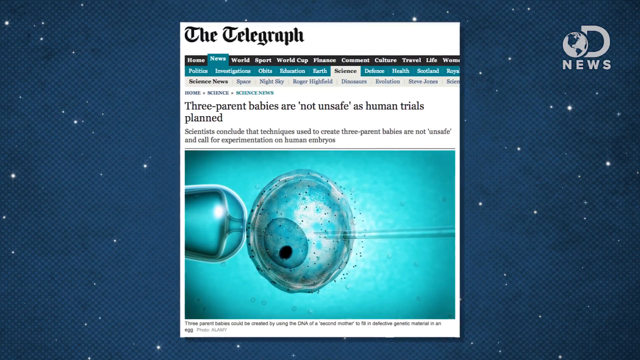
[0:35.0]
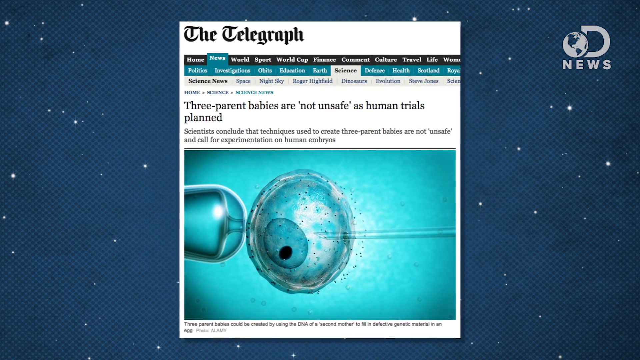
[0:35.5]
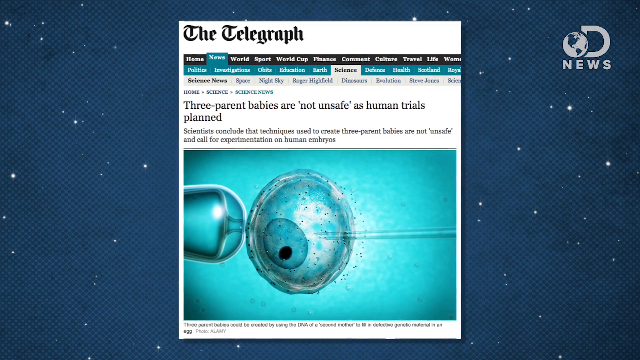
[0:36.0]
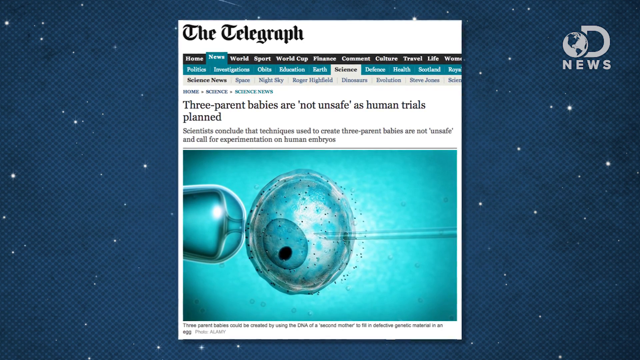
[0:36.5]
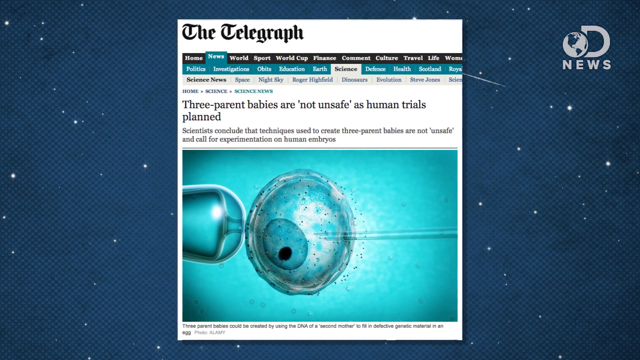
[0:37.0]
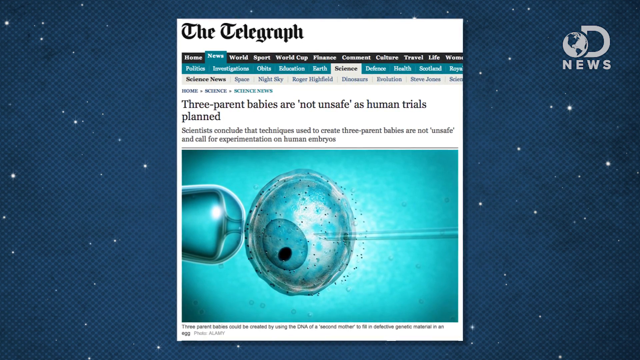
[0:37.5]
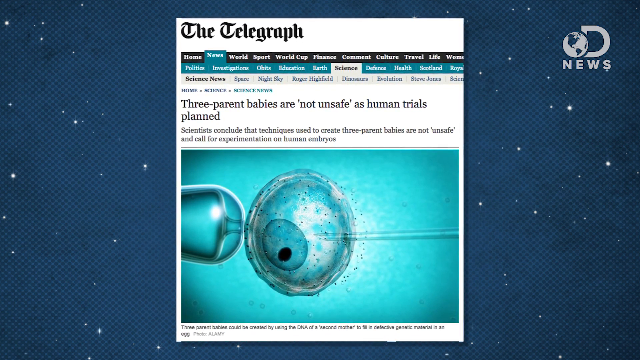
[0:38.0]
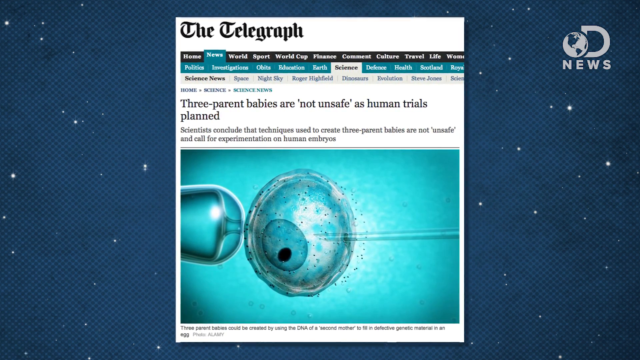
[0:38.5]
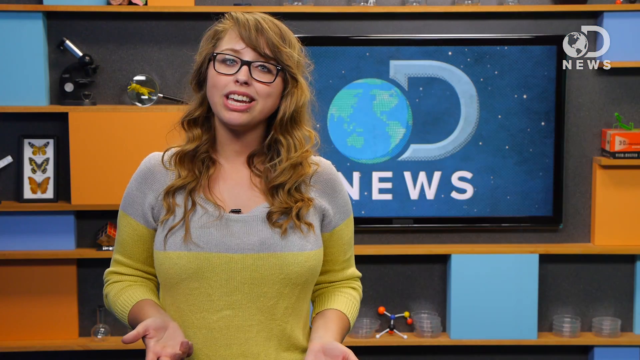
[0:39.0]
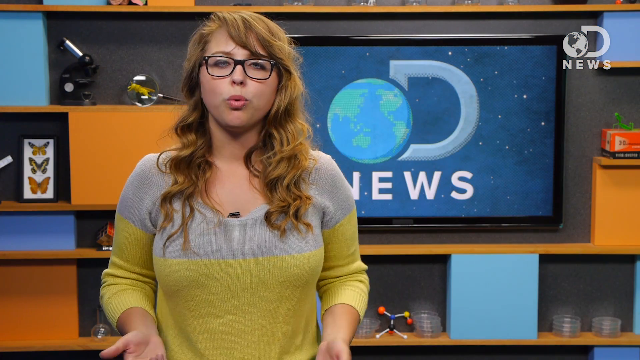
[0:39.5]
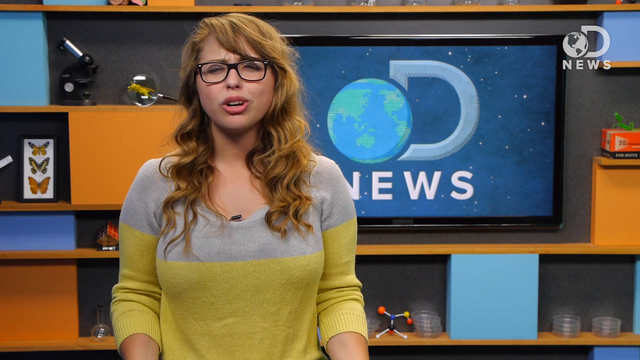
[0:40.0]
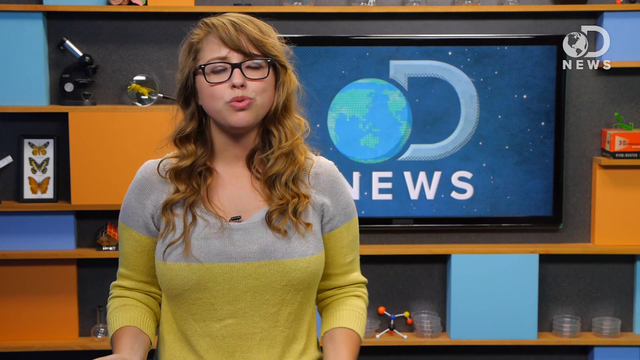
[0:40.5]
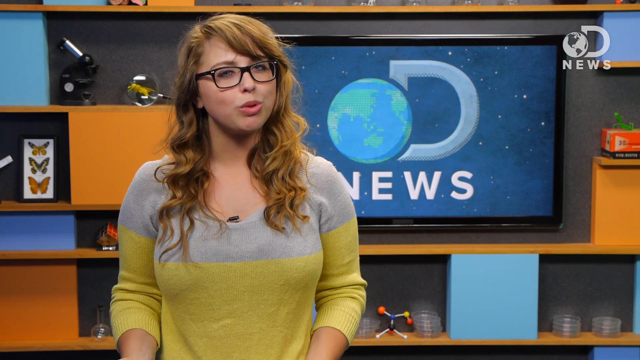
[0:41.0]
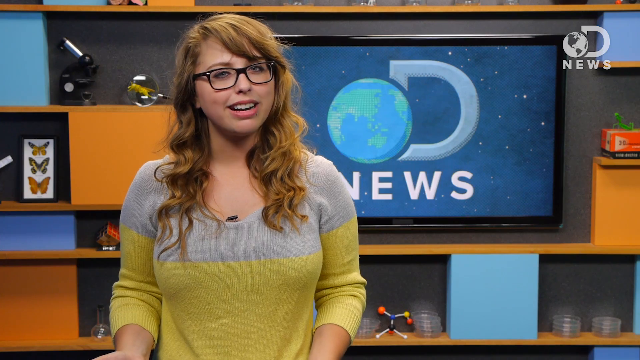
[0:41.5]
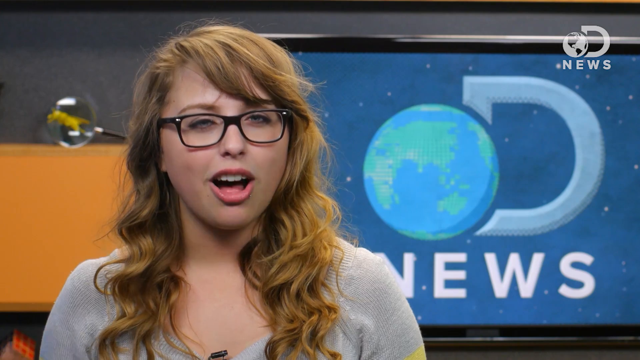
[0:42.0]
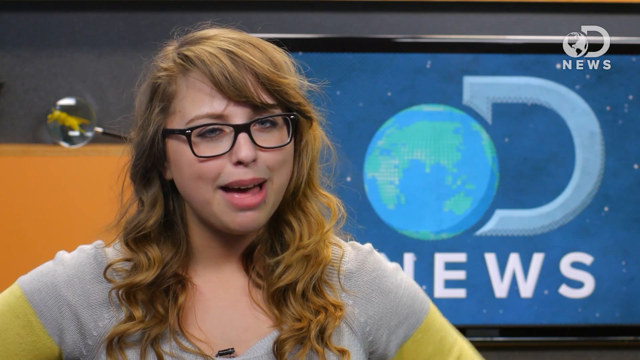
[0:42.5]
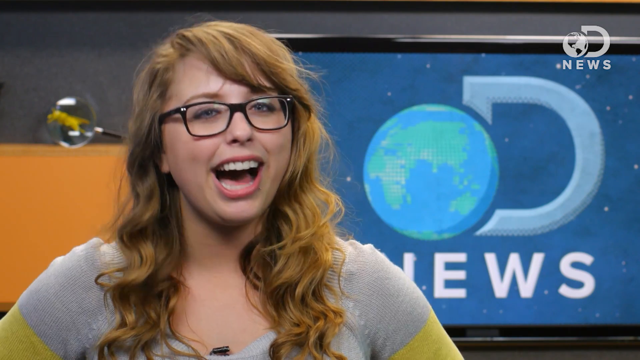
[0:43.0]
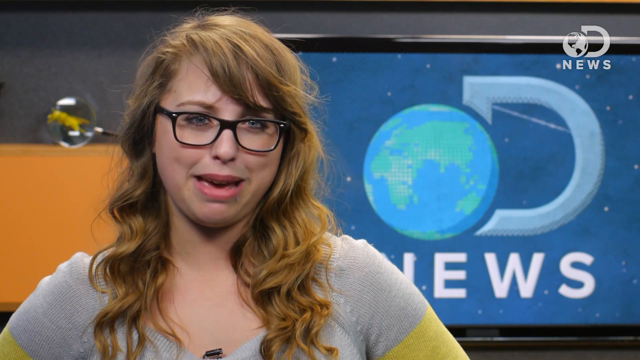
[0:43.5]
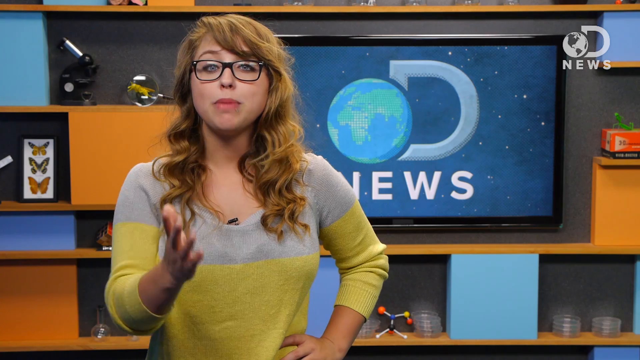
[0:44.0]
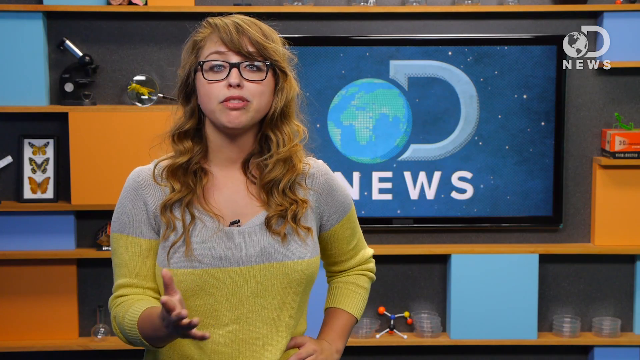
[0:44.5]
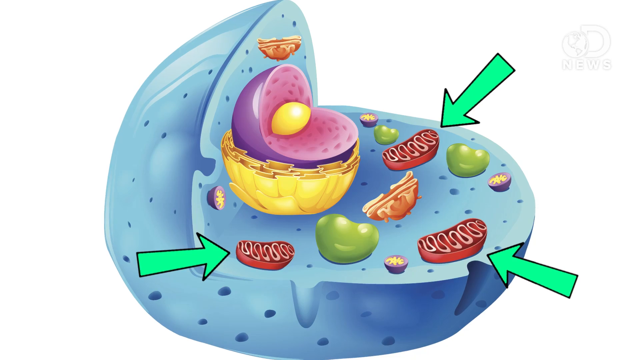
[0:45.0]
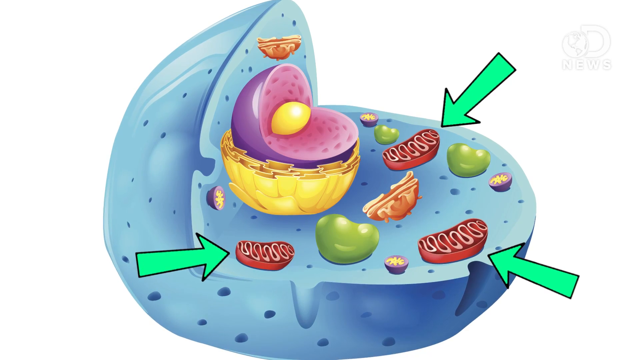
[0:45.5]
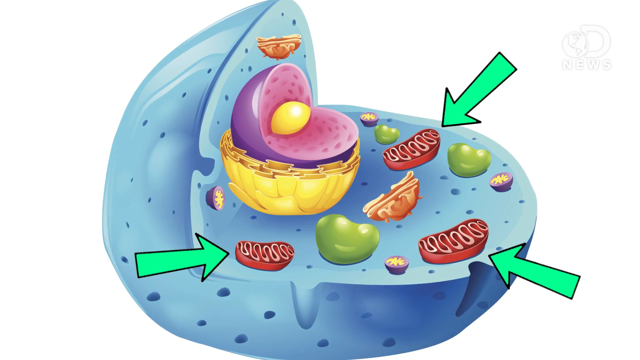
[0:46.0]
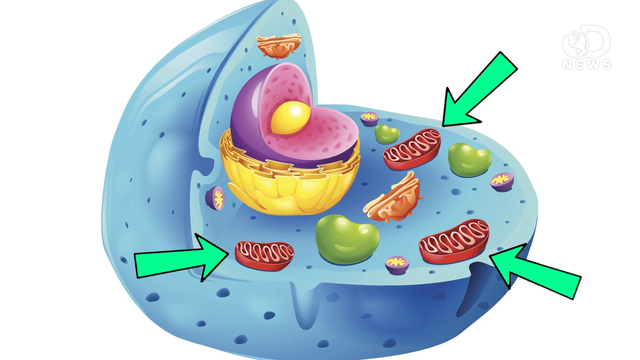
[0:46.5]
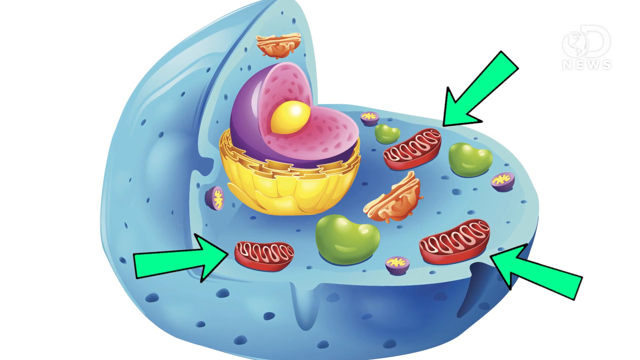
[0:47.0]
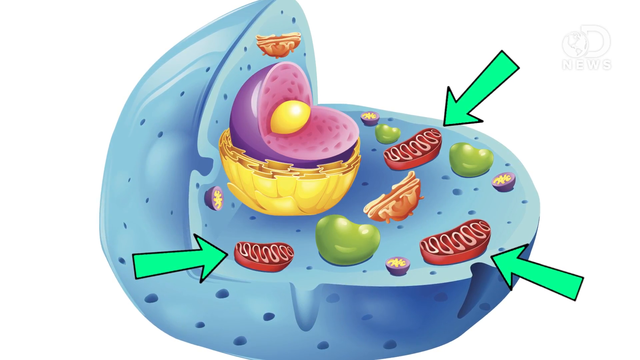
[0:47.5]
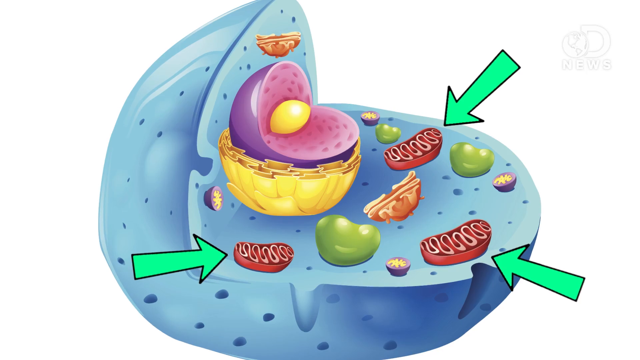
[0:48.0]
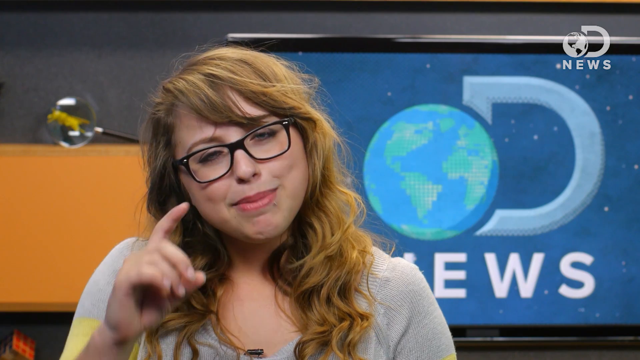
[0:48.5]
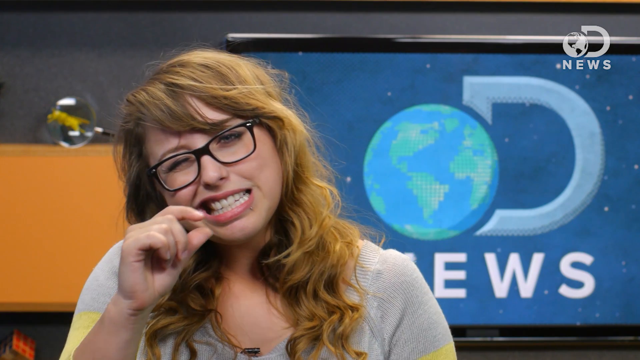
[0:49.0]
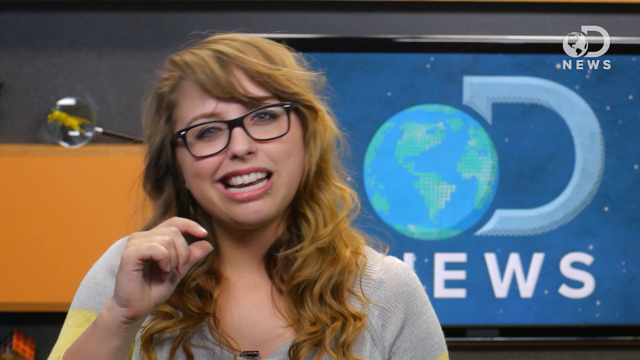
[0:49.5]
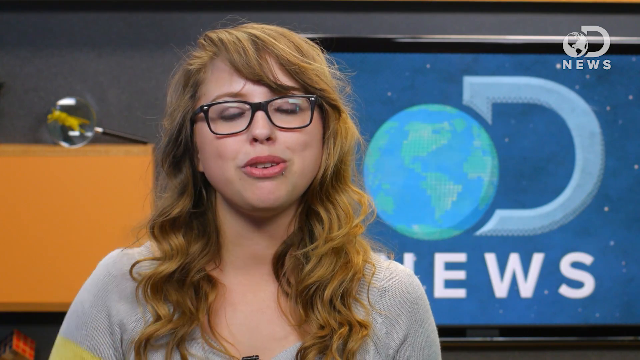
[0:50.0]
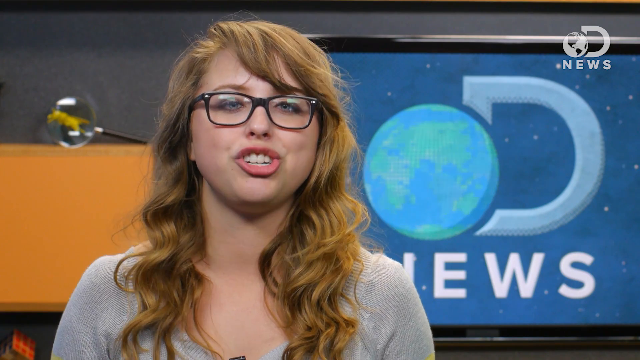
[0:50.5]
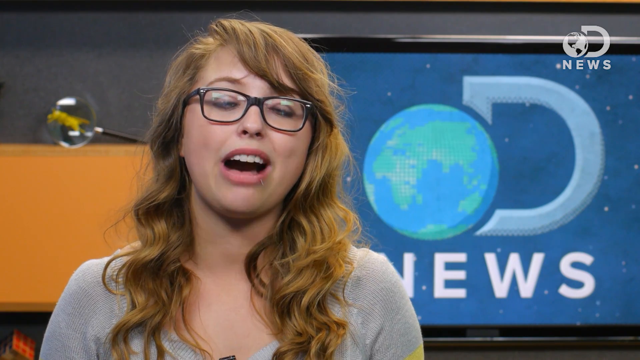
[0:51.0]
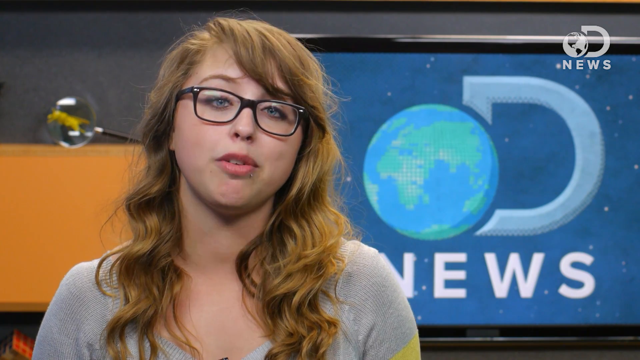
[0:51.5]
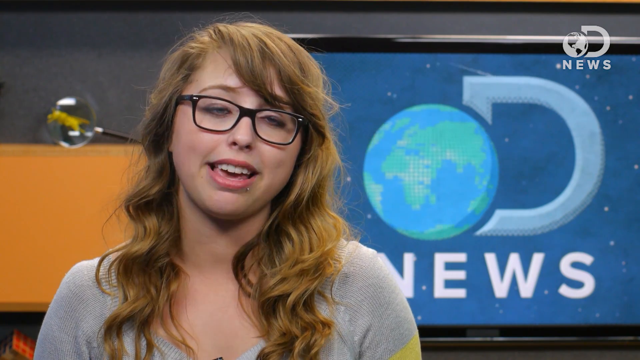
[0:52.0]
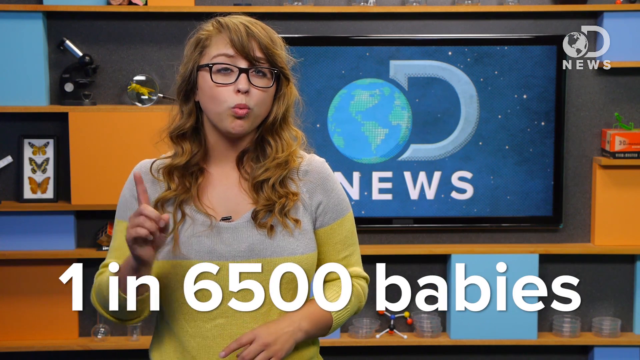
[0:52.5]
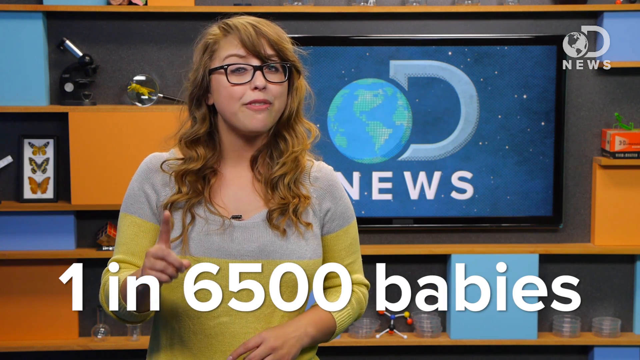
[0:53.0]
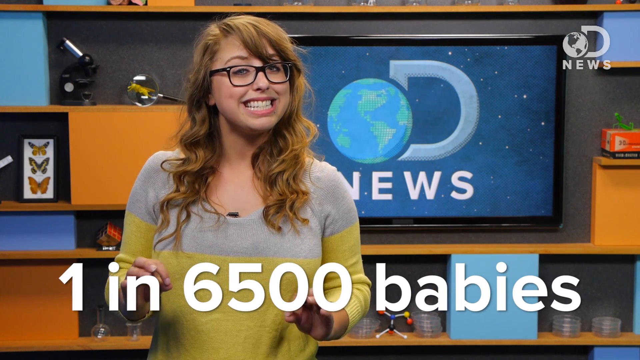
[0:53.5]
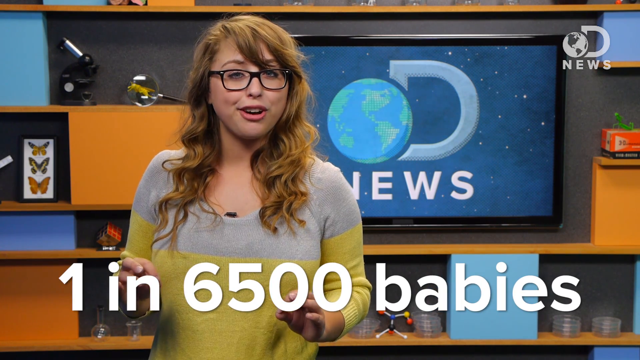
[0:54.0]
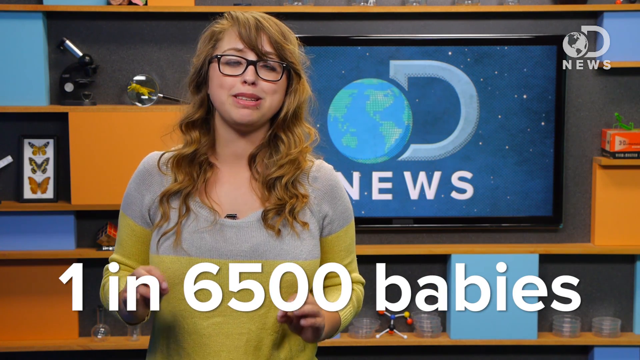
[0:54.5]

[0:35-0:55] The article reading "three parent babies are not unsafe as human trials planned" is on the screen, and then the video pans back to the reporter, who talks very expressively. Next is a blue graphic of nuclei, possibly DNA, showing its different parts in different colors: purple, yellow, red and green, with arrows pointing to the red areas. It pans back to the reporter, again talking very expressively, and writing pops up on the screen saying "one in 6,500 babies."